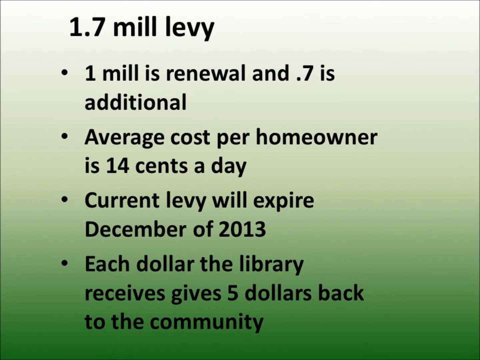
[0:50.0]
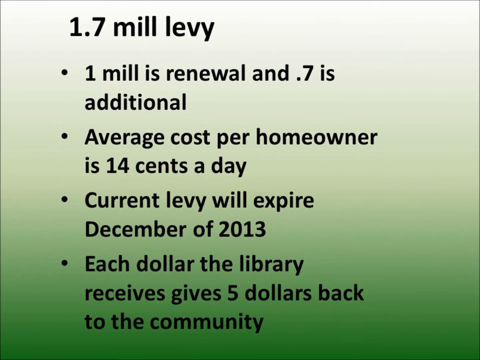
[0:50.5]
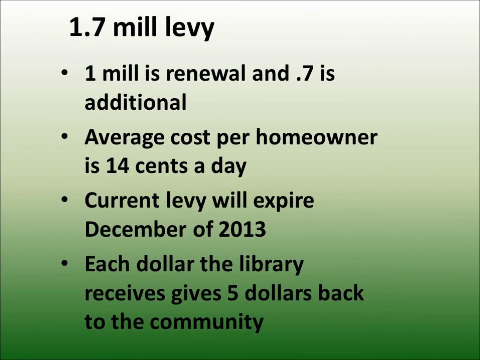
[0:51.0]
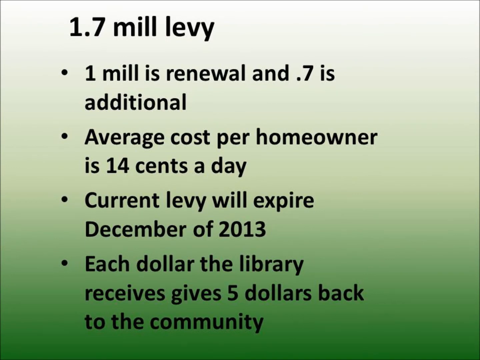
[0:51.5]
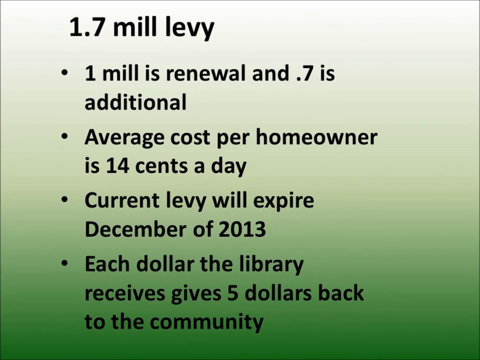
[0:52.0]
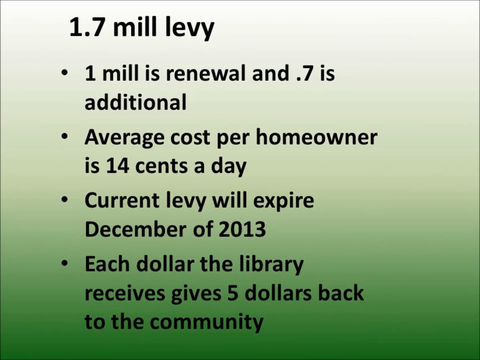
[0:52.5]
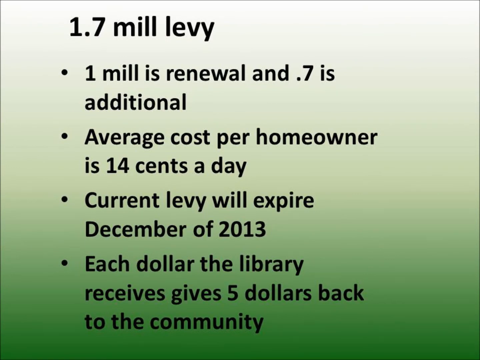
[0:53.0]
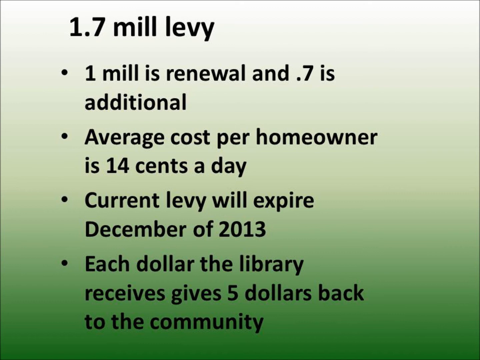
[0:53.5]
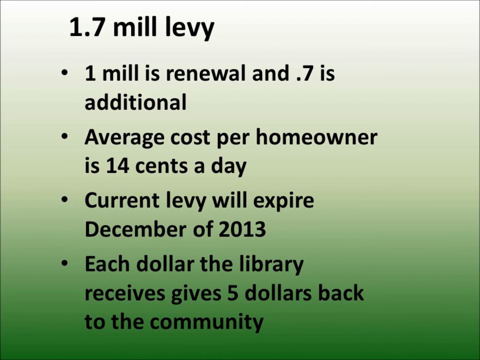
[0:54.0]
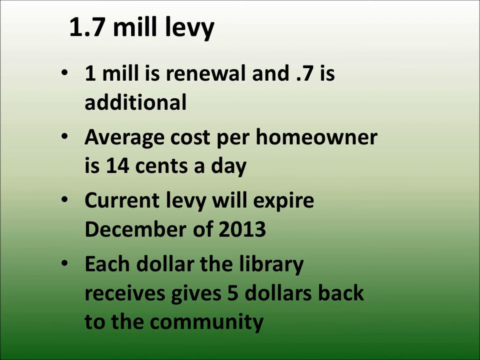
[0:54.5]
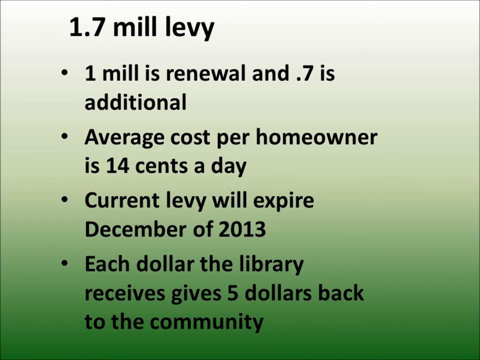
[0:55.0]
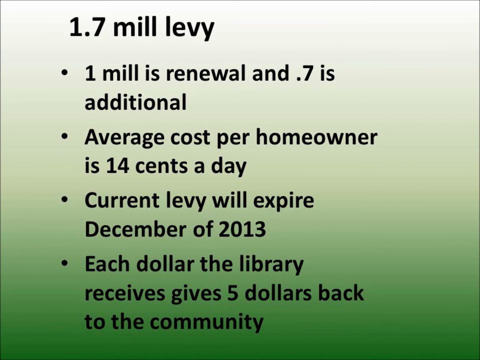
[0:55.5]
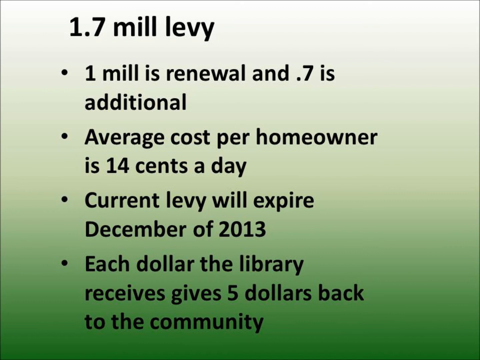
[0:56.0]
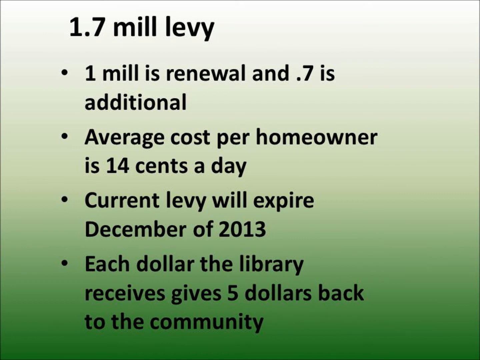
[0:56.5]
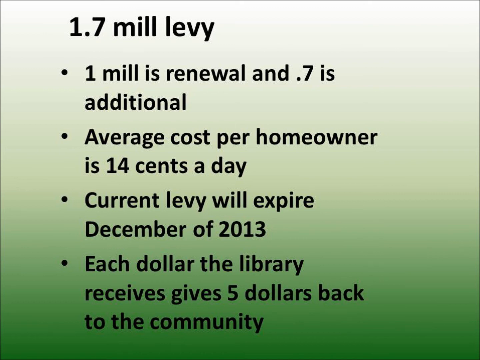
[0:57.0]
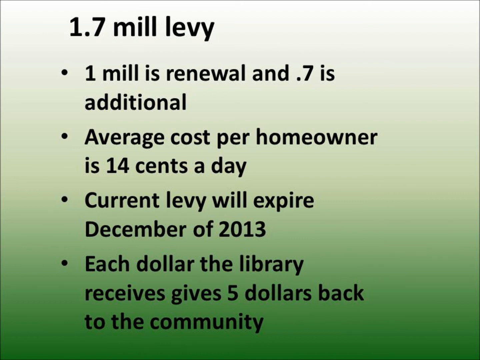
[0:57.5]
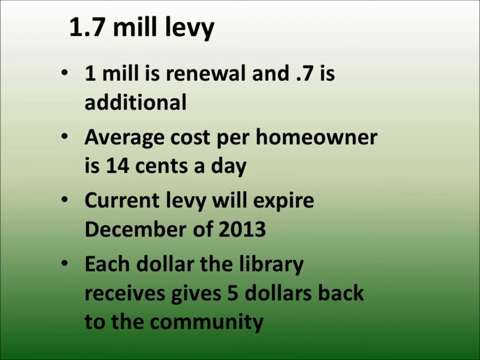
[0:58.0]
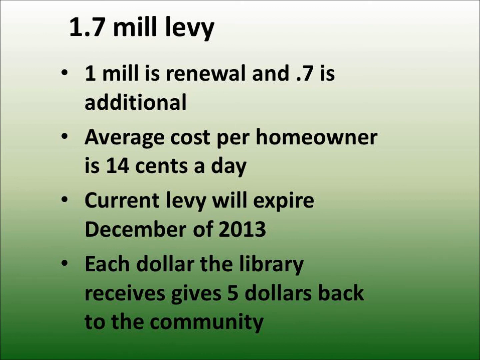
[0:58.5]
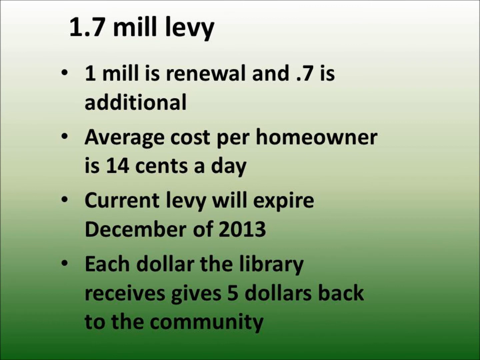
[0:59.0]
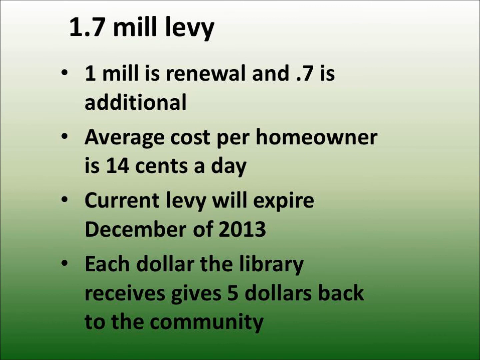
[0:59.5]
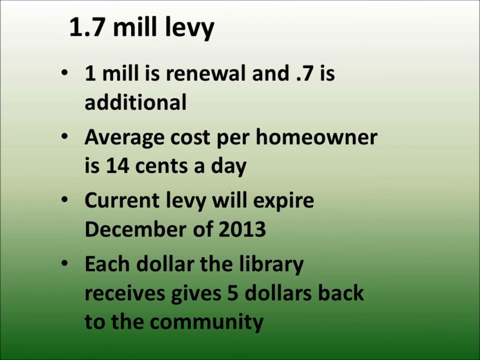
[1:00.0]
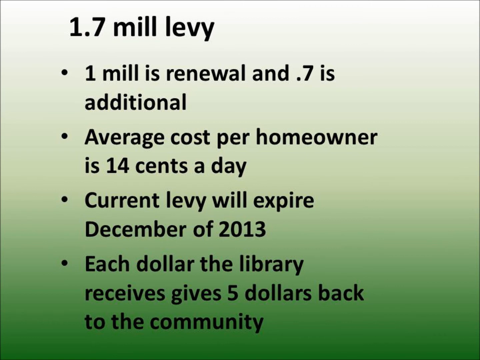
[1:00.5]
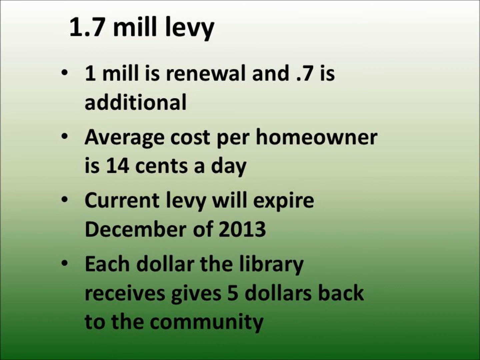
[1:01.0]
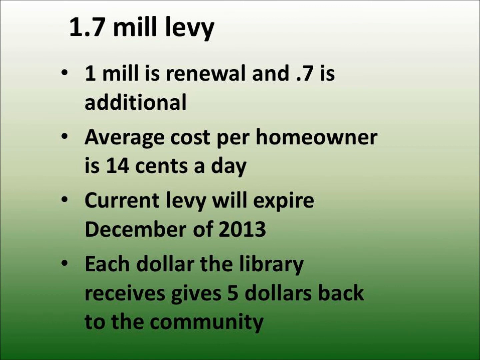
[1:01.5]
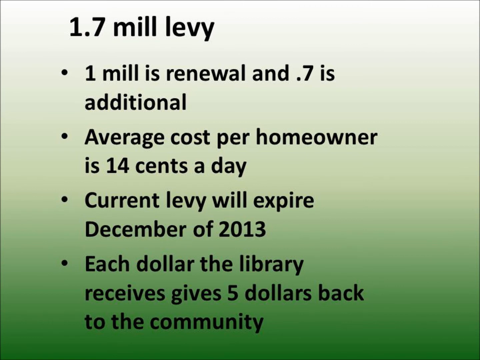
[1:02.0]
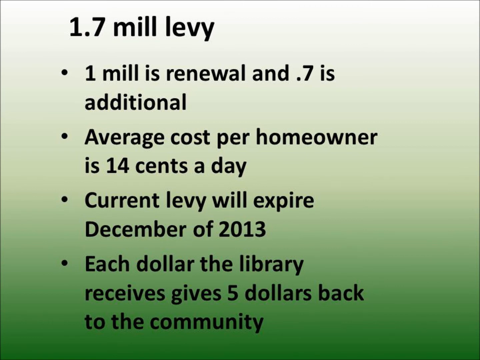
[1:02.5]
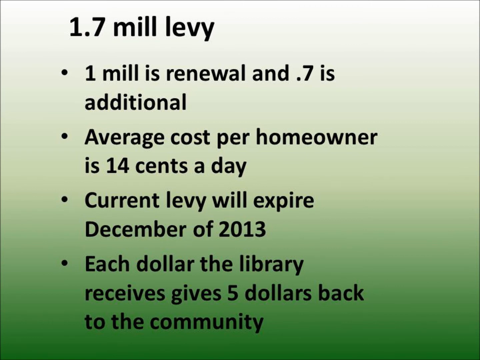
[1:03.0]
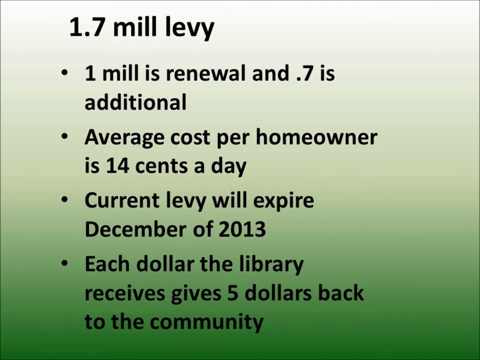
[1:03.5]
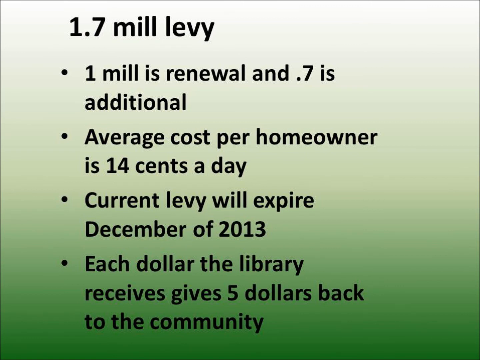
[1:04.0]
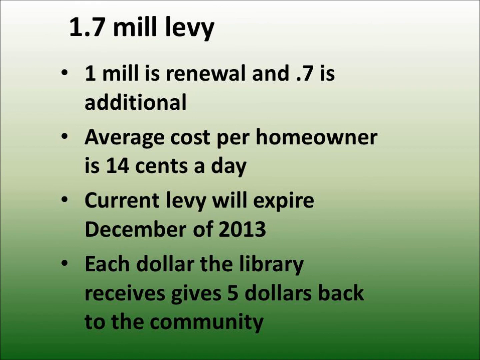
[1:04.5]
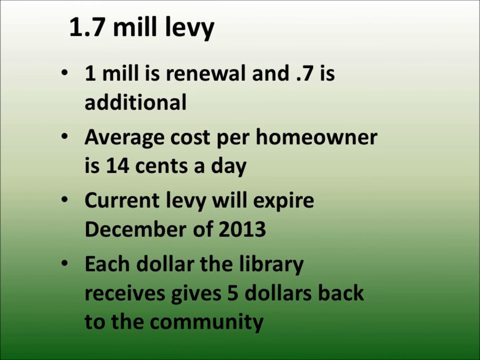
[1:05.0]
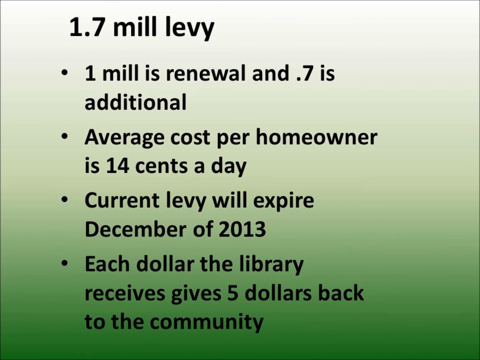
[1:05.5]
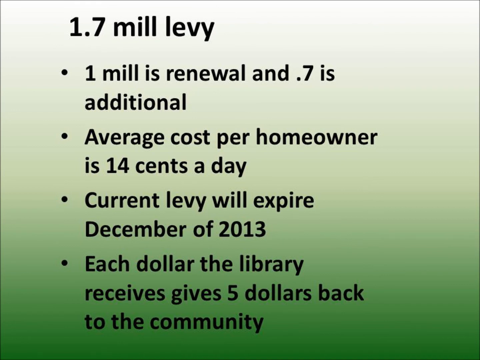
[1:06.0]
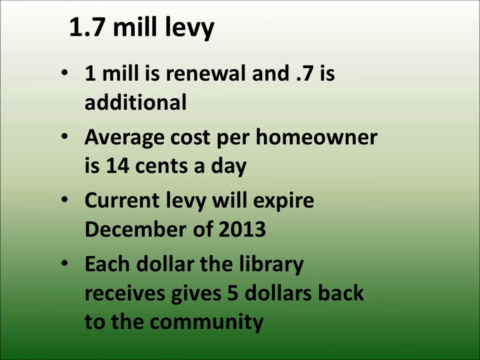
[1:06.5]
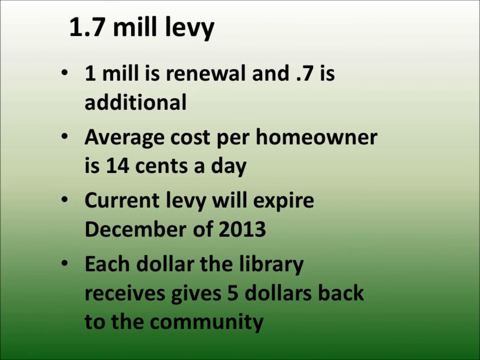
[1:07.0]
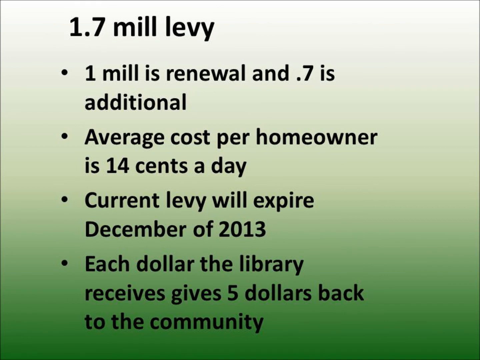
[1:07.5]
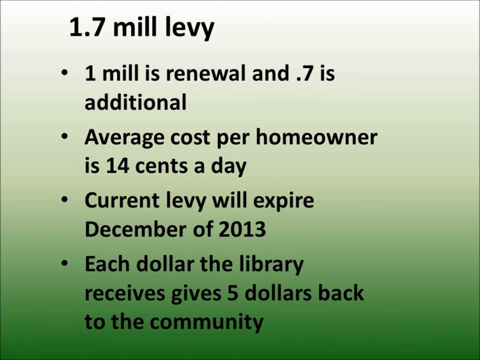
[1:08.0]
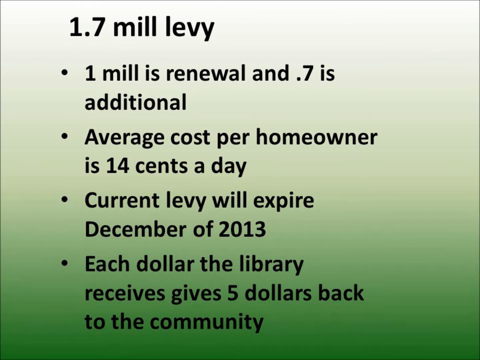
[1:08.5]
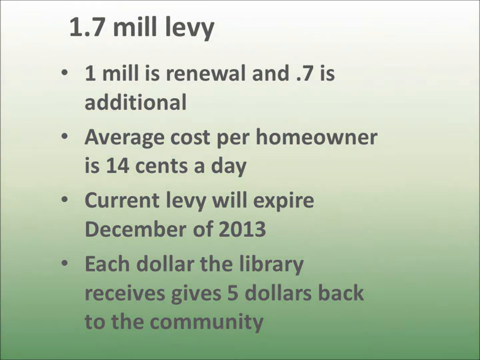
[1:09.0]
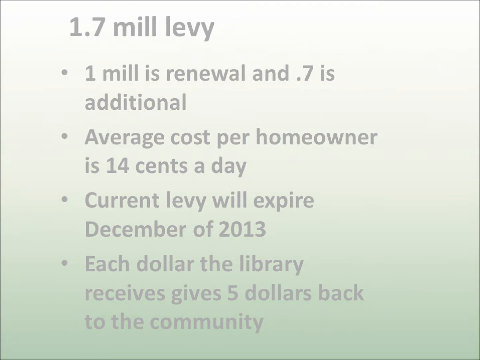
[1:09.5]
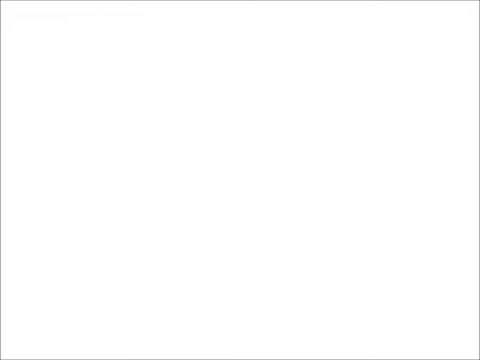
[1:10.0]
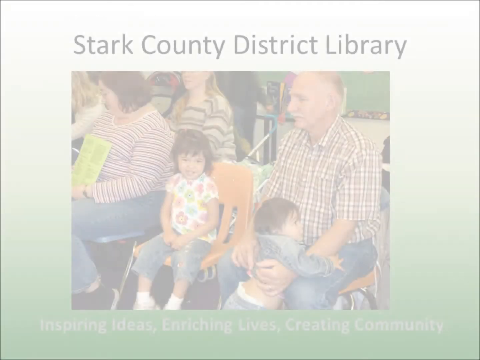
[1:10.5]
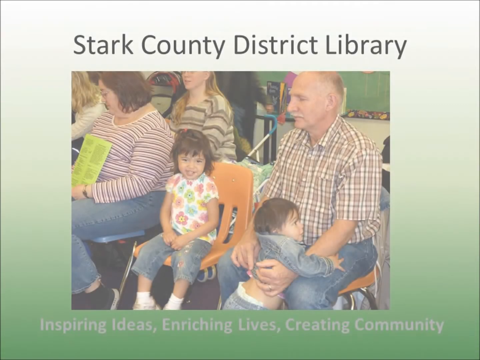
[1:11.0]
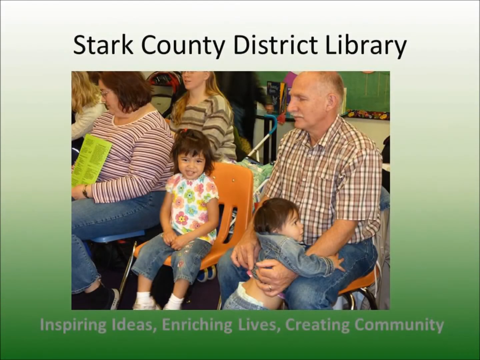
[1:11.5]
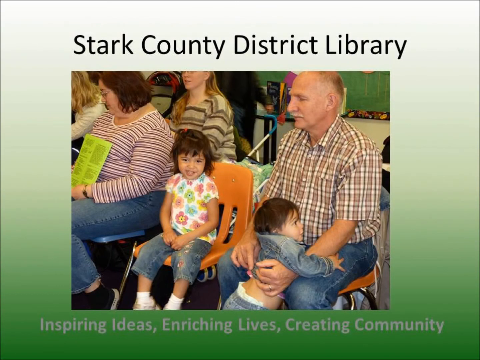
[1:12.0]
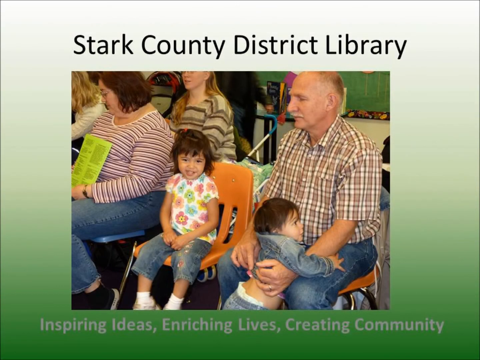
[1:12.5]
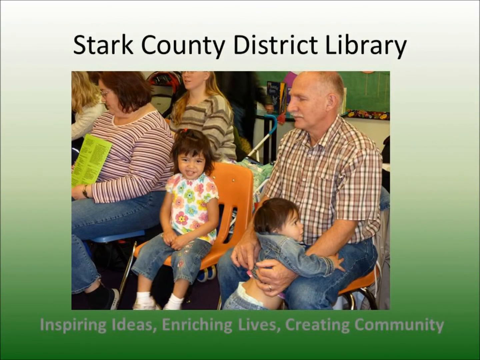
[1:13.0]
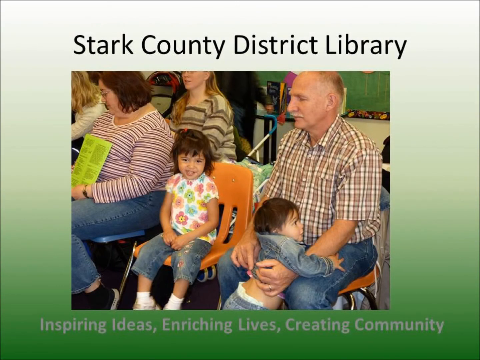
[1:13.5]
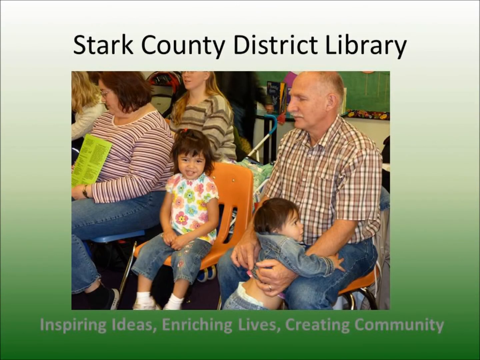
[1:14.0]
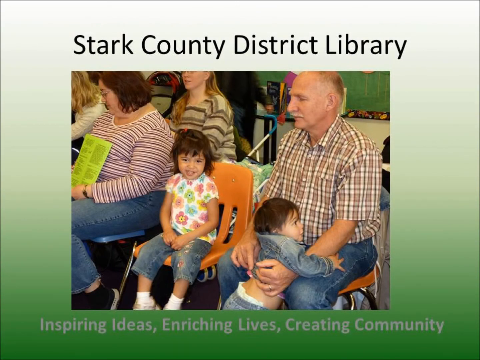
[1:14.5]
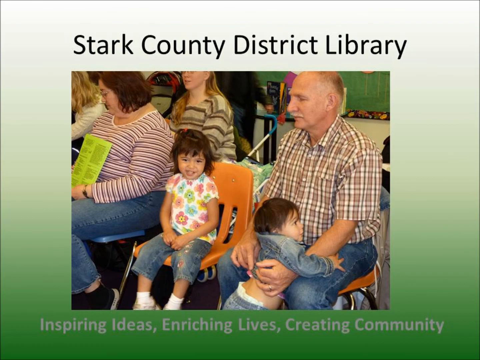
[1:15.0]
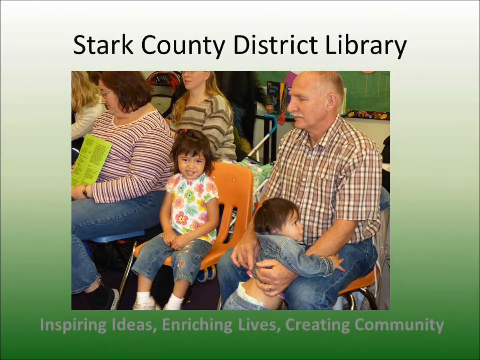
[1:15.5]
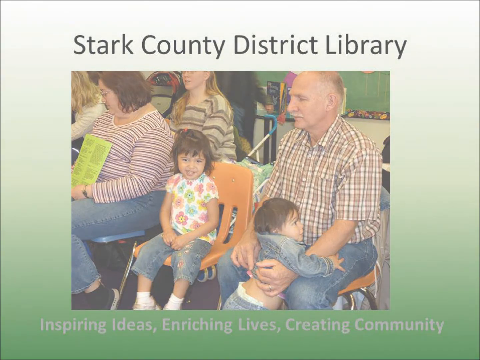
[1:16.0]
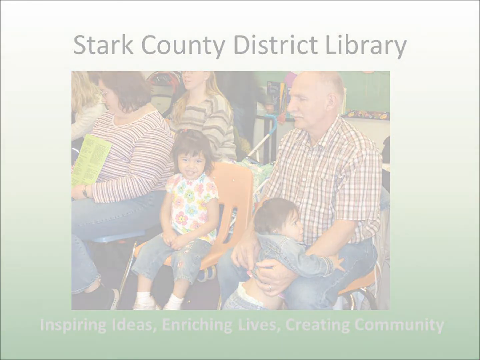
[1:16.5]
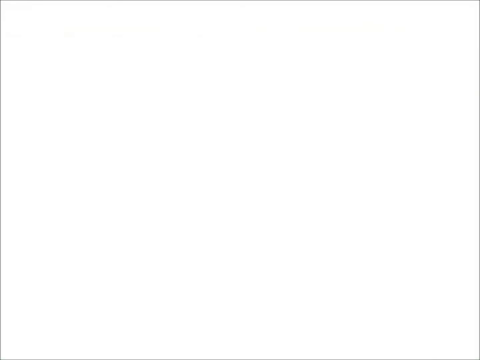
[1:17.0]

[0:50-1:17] The advertisement banner for Stoke Country District's library focuses on the physical hard copy books the library lends to its members. Its slogan is inspiring ideas, enriching lives, and creating a community, the Stoke Country Library. The library also has a range of e-books available for kids to borrow. A number of partners are shown, along with a shadow image of about six individuals holding hands. In 2011, customers borrowed over 24,000 e-books, all free of charge. Partners listed include the Kadzaneep Symphony Orchestra, the Pristany Foundation, the Lake Blue, and Rotary International.